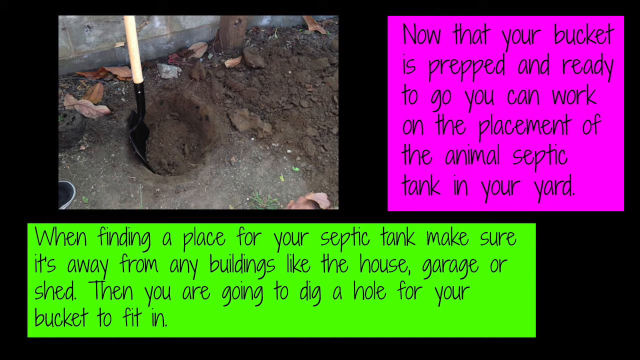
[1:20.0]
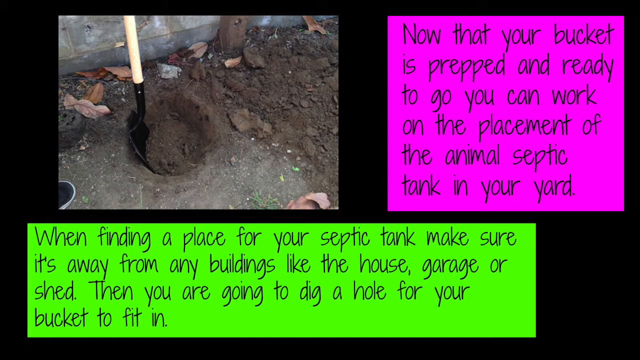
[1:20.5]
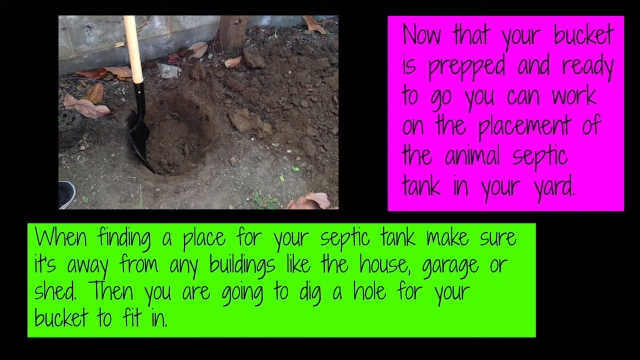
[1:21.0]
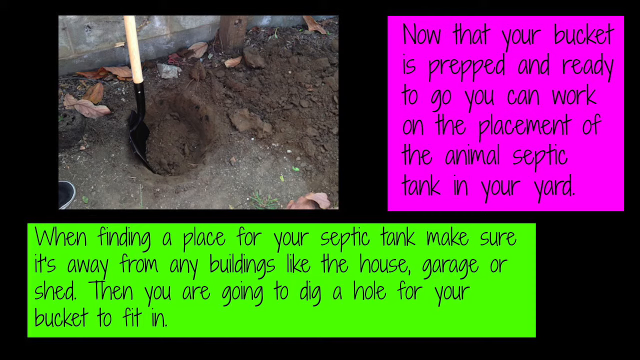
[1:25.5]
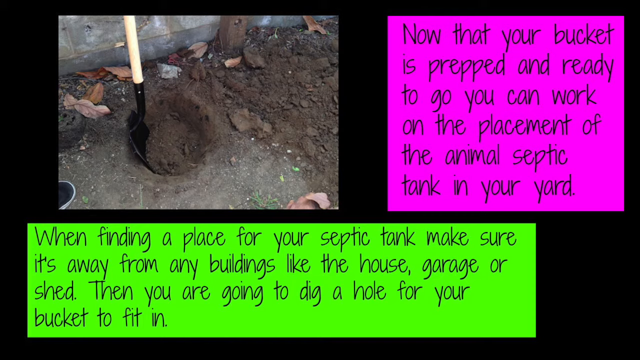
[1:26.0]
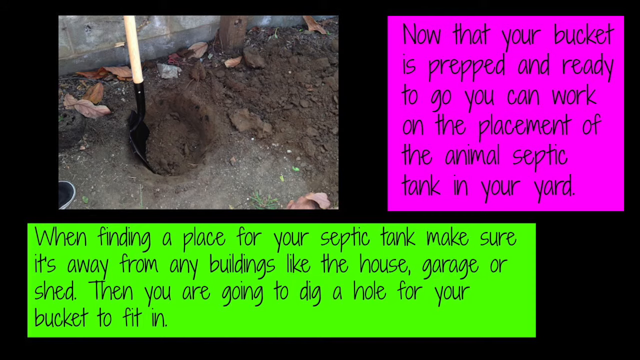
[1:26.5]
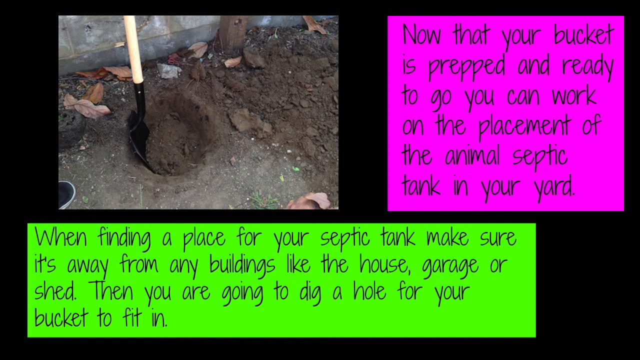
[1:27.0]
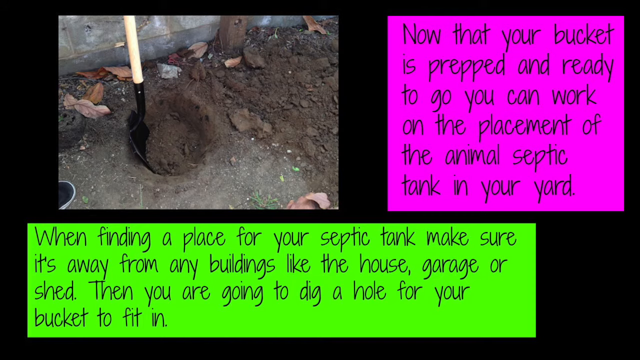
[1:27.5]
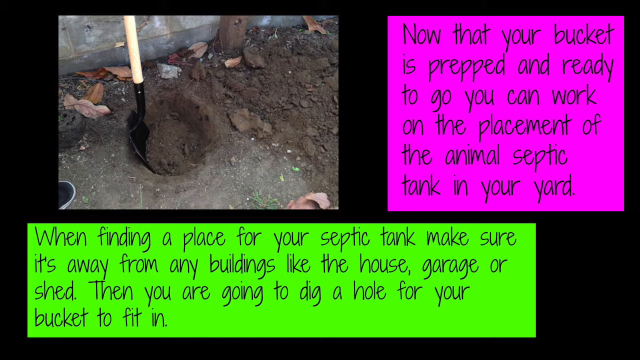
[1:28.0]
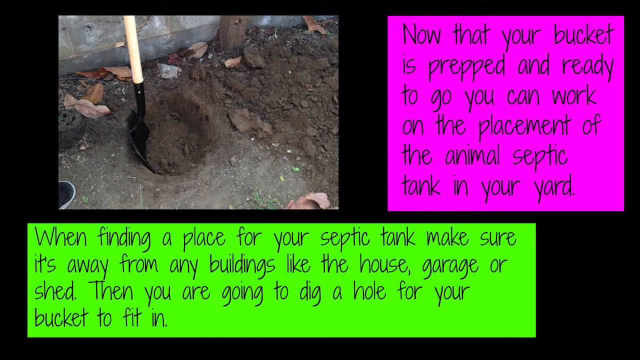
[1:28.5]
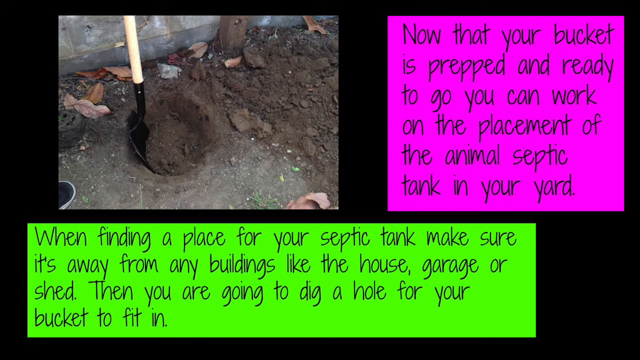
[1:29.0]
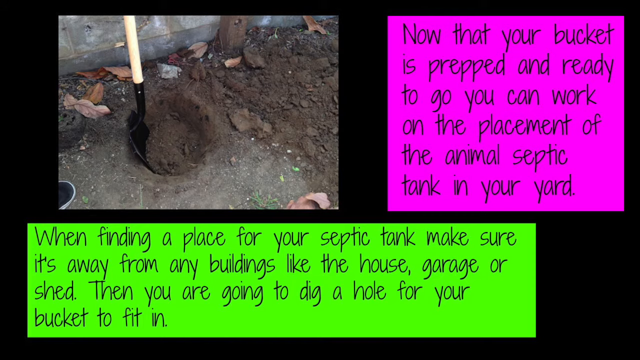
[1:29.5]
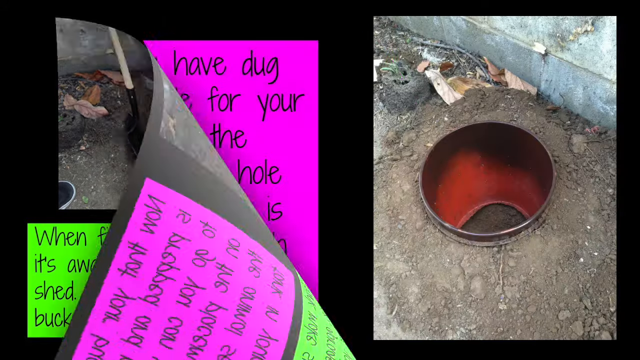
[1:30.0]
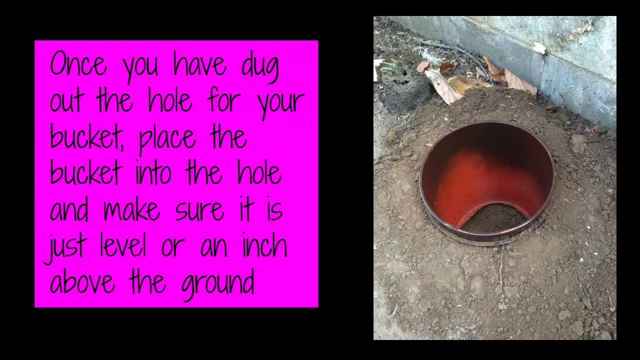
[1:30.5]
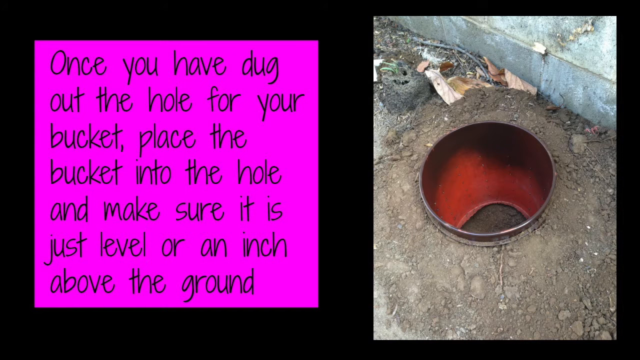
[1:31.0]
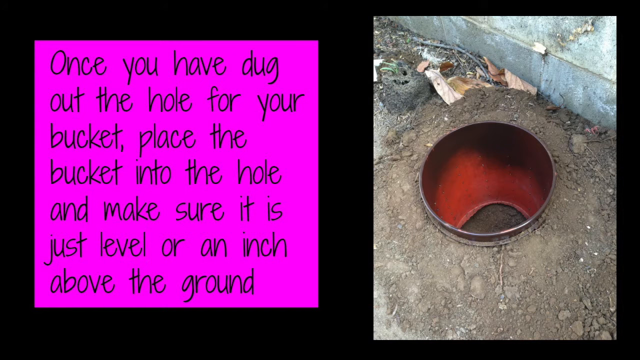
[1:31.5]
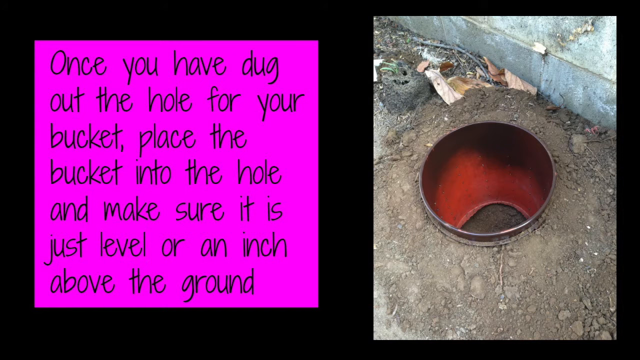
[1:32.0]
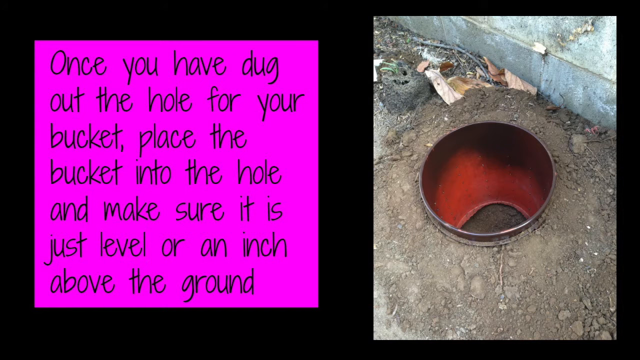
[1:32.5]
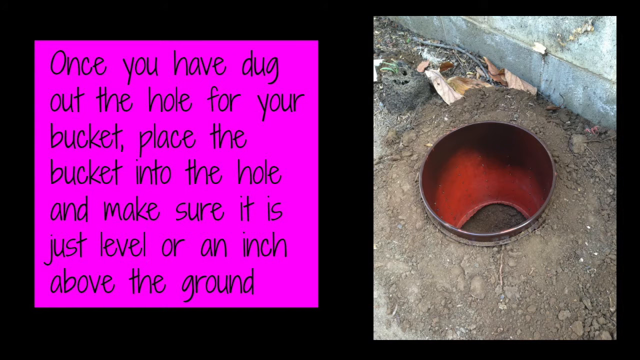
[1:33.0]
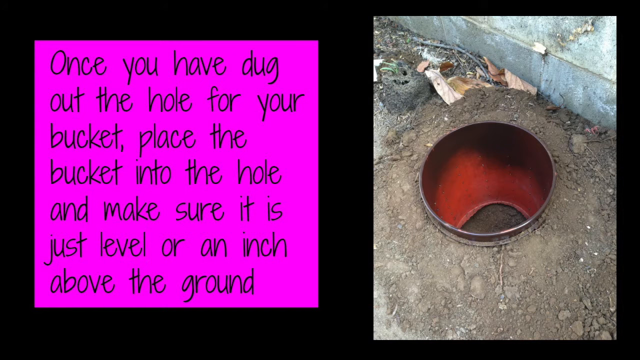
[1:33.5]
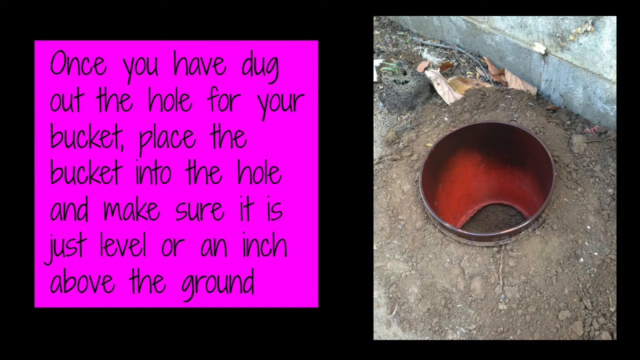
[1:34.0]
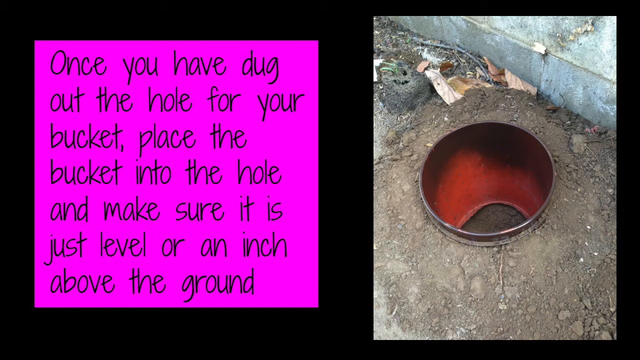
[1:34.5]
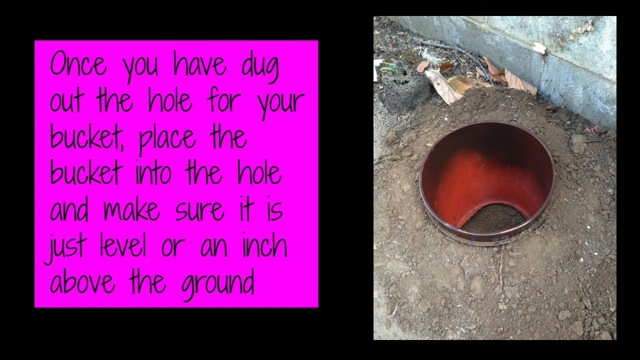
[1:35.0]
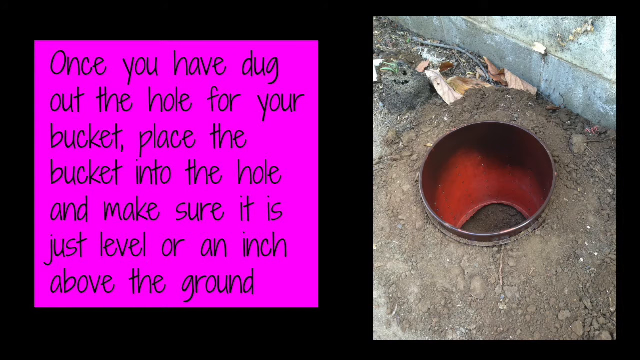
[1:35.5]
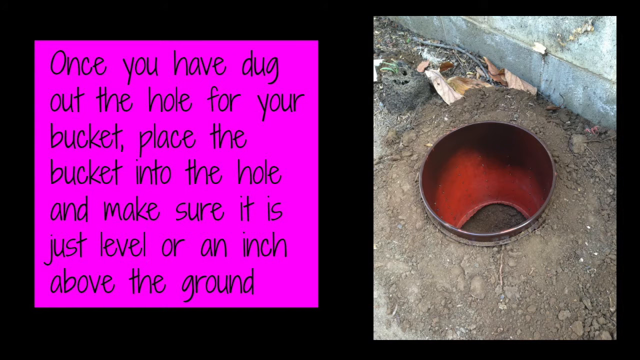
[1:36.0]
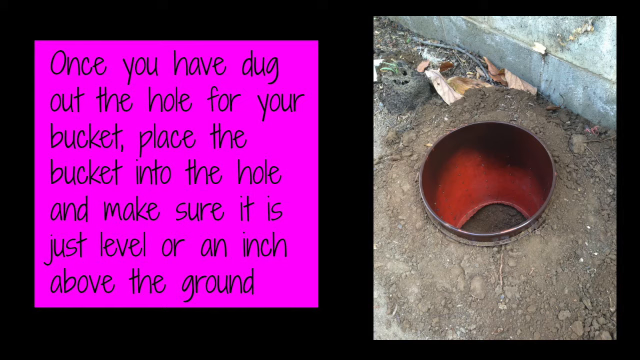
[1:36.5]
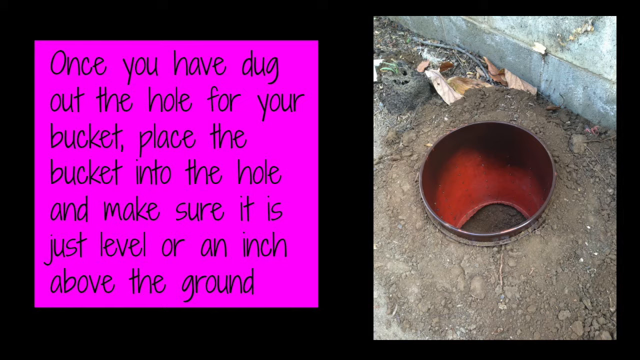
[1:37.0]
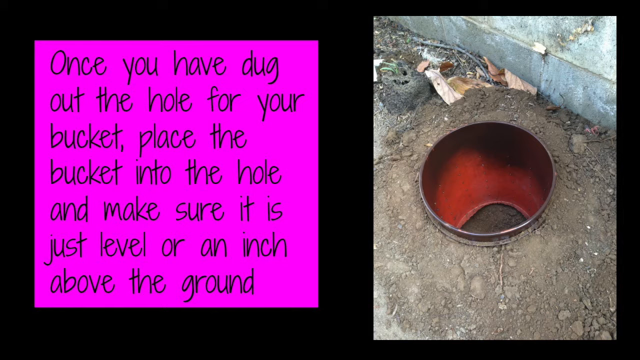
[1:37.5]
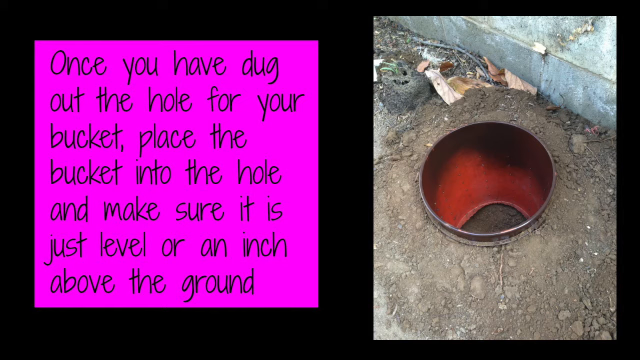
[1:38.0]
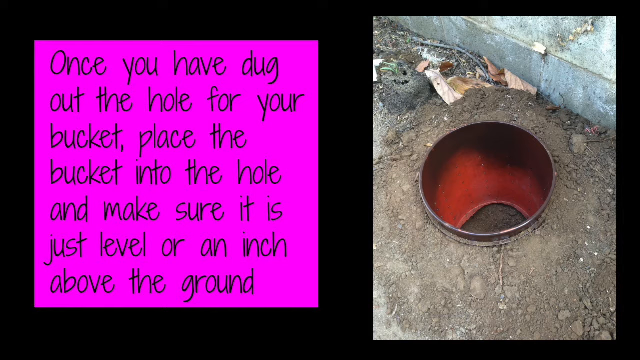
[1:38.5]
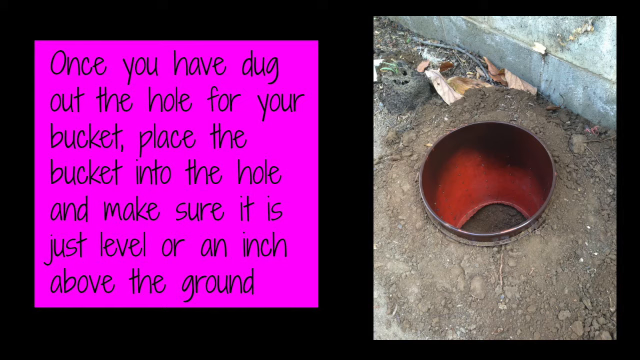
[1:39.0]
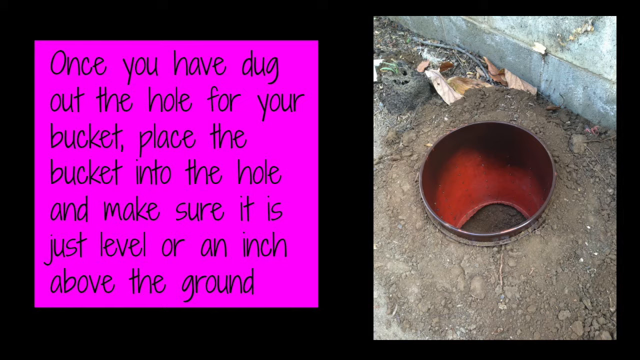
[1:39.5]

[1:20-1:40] A transition like a page turning brings up a slide with two pieces of information. The first is text in a black handwriting font on a pink background: "once you have dug out the hole for your bucket place the bucket into the hole and make sure it is just level or an inch above the ground." On the right-hand side, a photo appears to show the bucket placed in the hole, level and about an inch above the ground. It is placed in the soil, with soil surrounding it and concrete blocks or a wall behind it. The interior of the bucket is red, with black spray paint around the top edges. Some leaves and dirt are on the floor in the background.